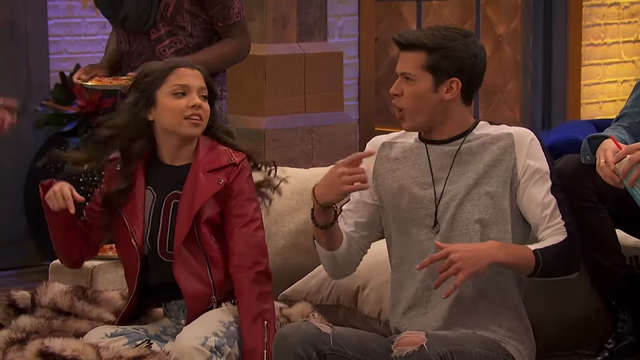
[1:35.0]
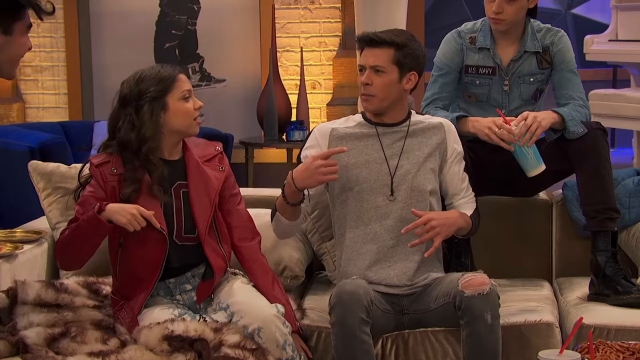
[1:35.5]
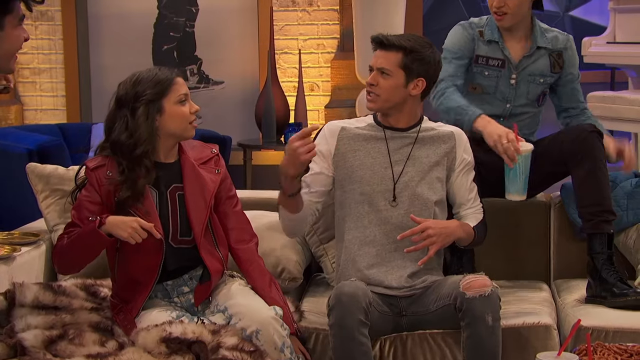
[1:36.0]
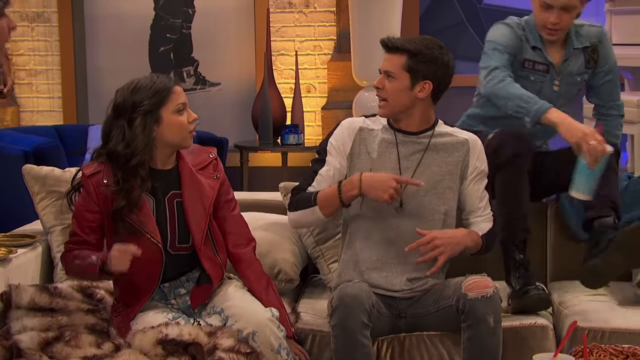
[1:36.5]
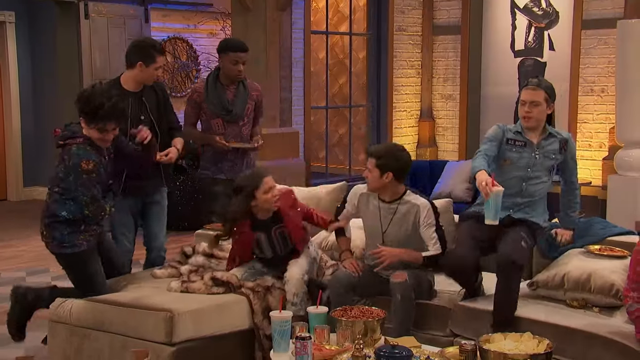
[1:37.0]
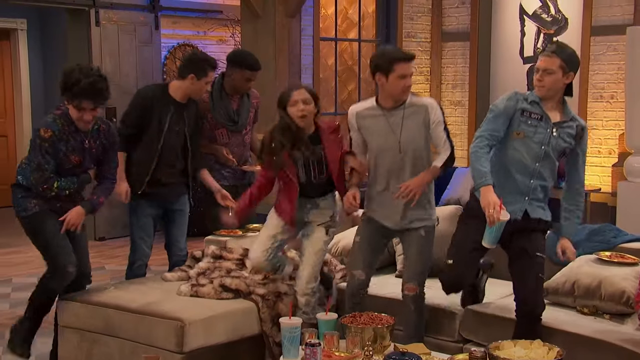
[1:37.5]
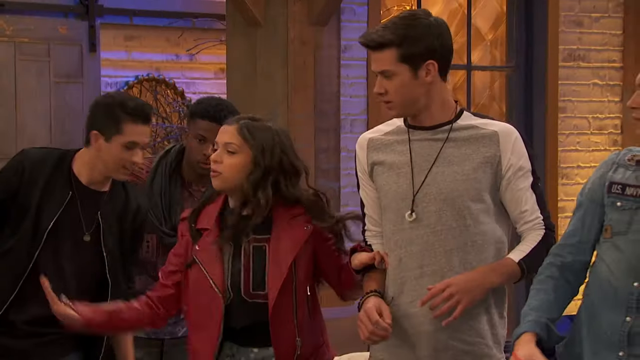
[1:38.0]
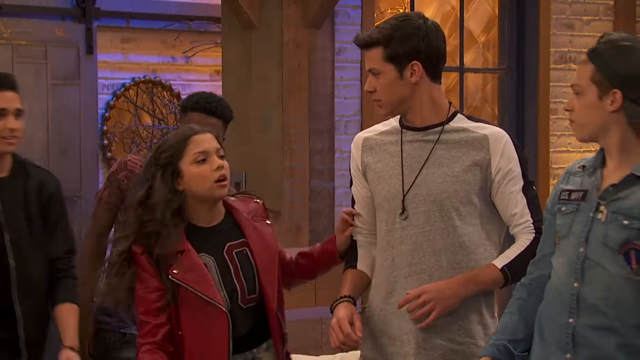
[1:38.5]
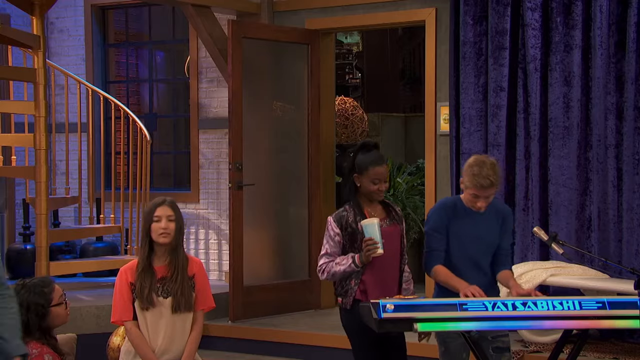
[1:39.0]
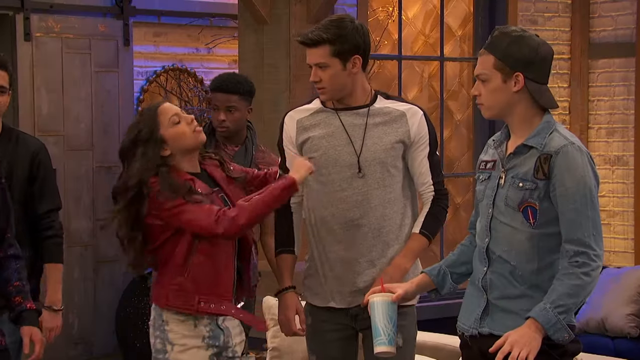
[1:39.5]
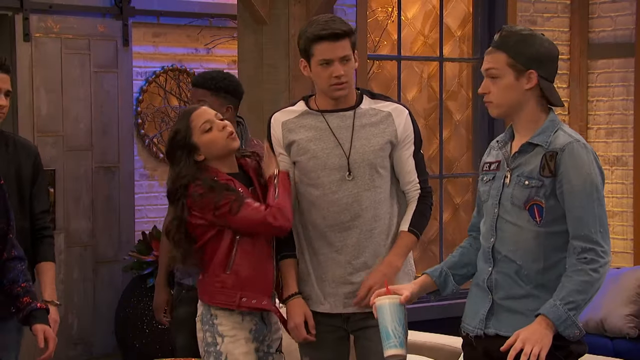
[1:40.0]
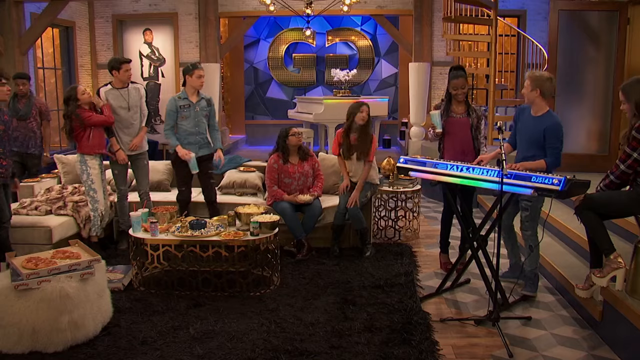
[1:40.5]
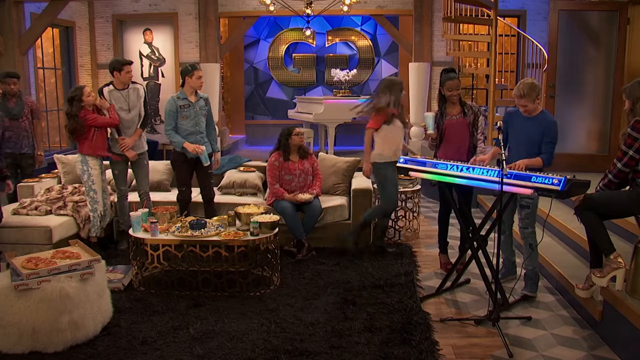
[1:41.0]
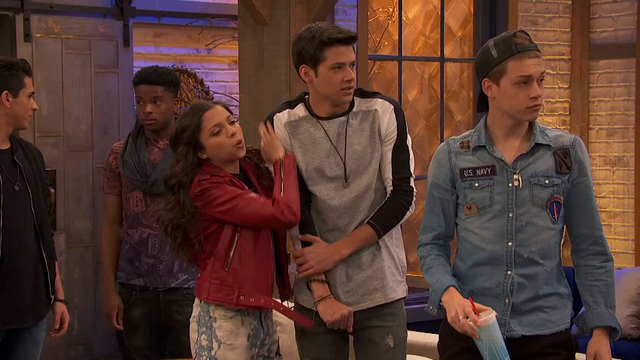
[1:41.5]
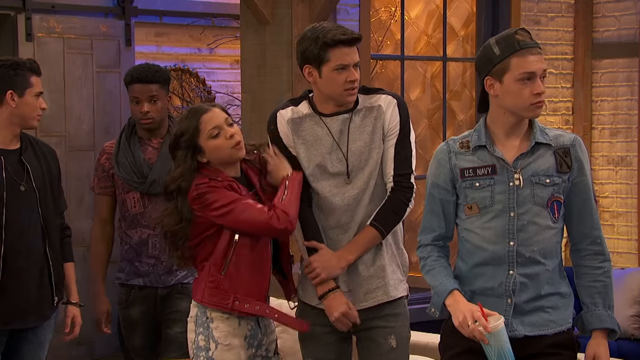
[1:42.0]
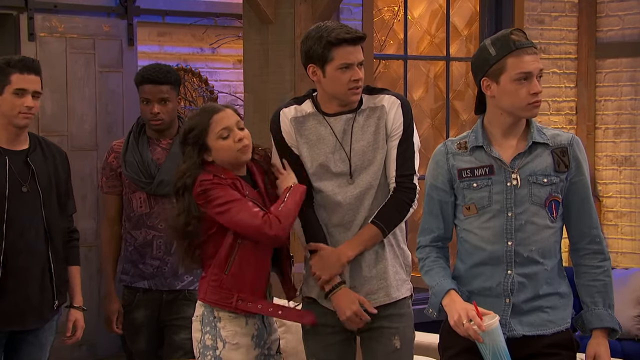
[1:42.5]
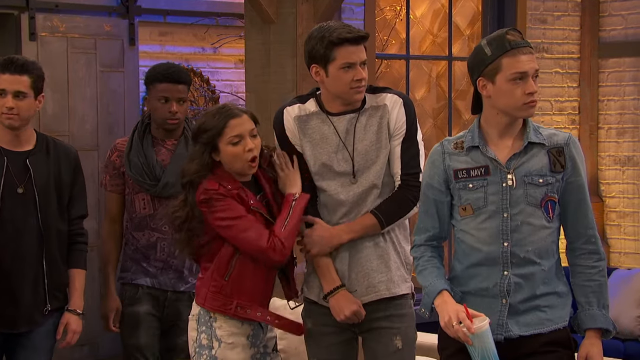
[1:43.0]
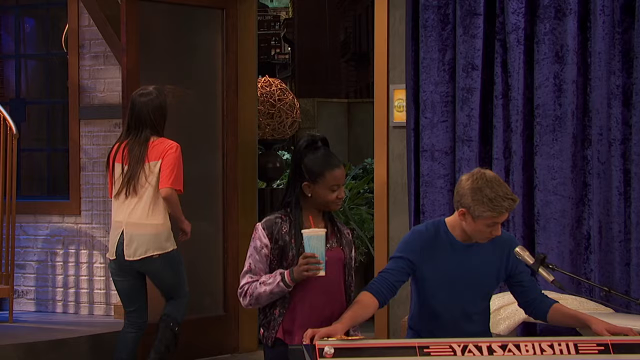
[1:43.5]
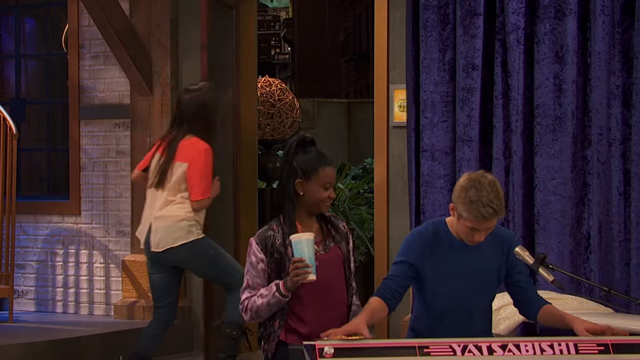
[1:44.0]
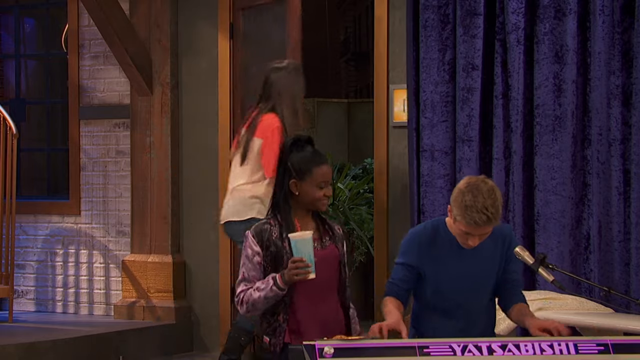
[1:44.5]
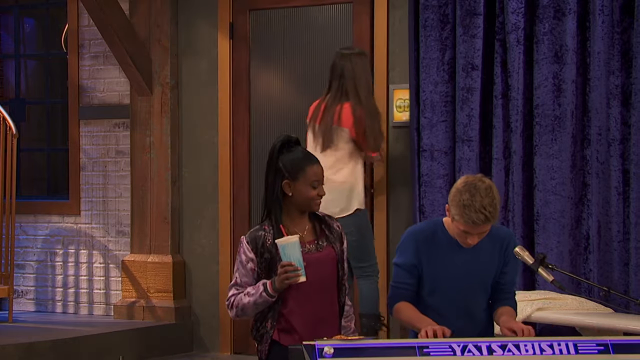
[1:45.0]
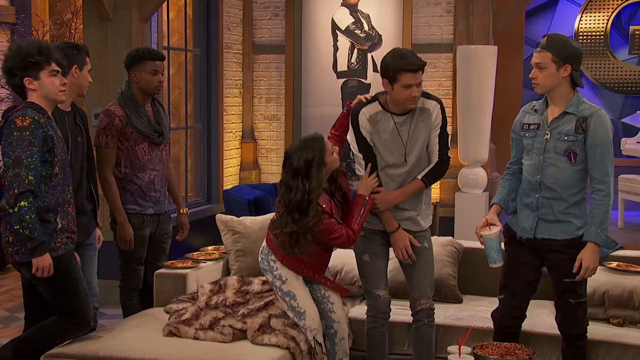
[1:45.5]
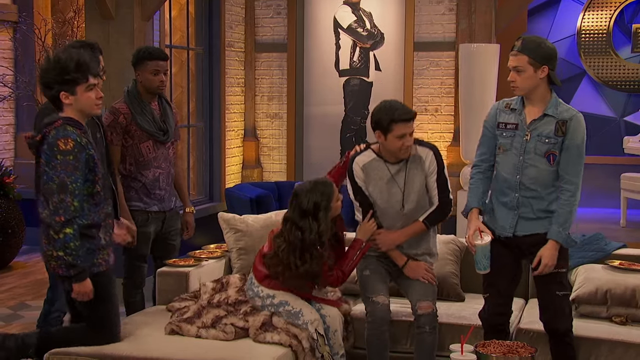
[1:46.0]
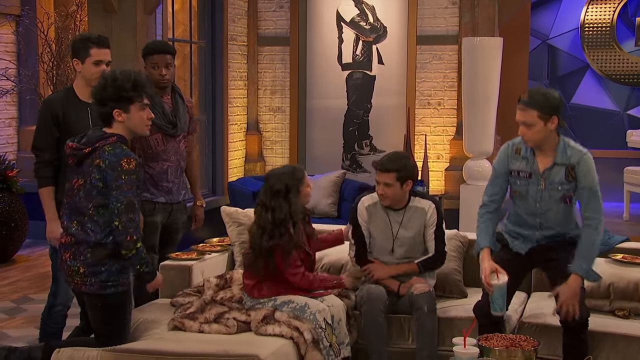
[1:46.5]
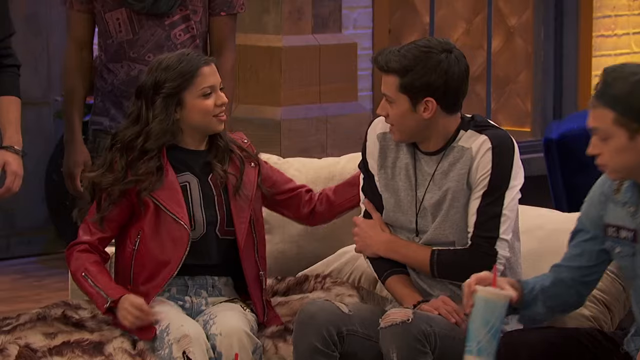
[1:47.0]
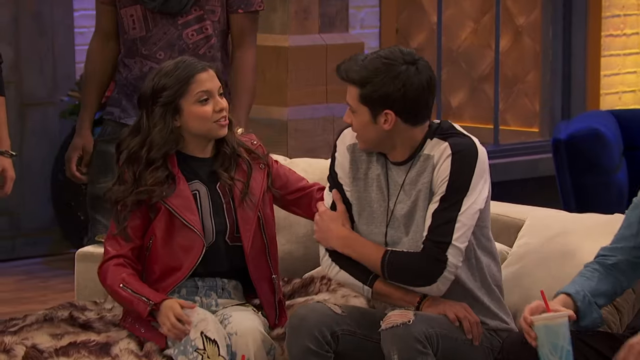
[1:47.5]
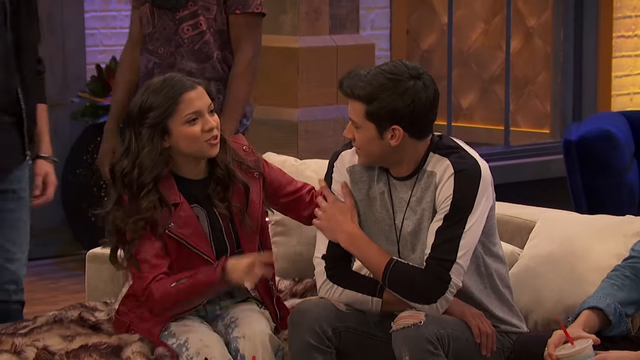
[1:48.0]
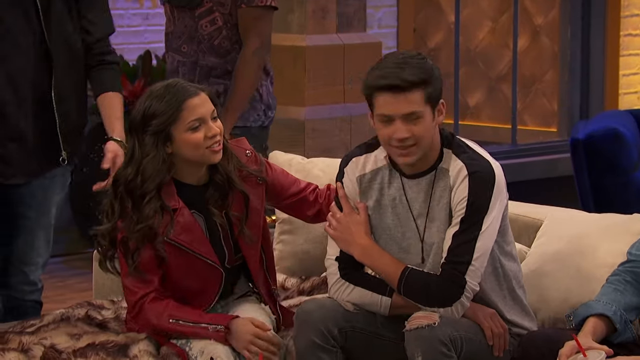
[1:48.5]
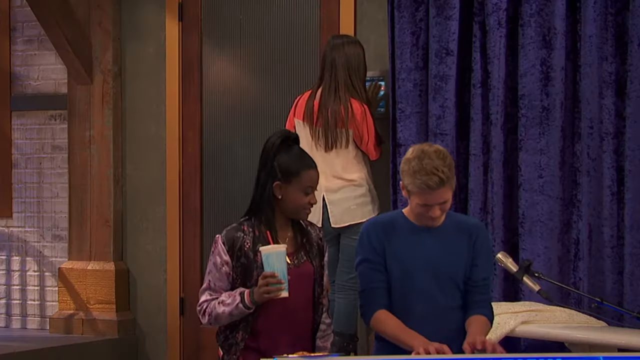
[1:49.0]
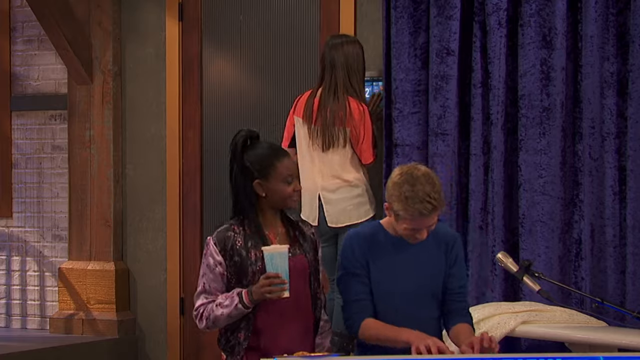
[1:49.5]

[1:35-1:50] The young teens are in a very social setting. Everyone who was sitting on the couch stands up and seems to indicate that they are getting very cold. One of the party guests goes and shuts a door while the other teens show that they are feeling very cold. The young lady on the couch seems to encourage everyone to sit back down and indicates that there is no problem with the room. All of the visitors appear to remain, while the guests at the back of the room continue with the music and seem unaffected.